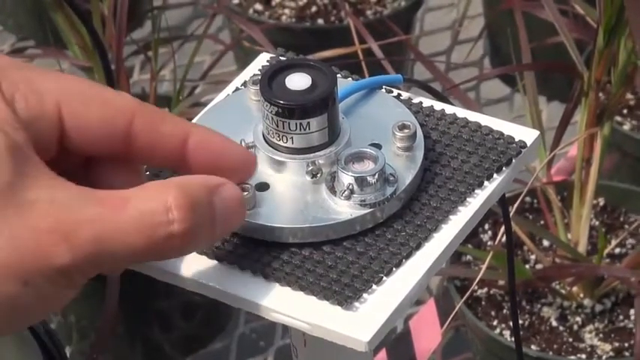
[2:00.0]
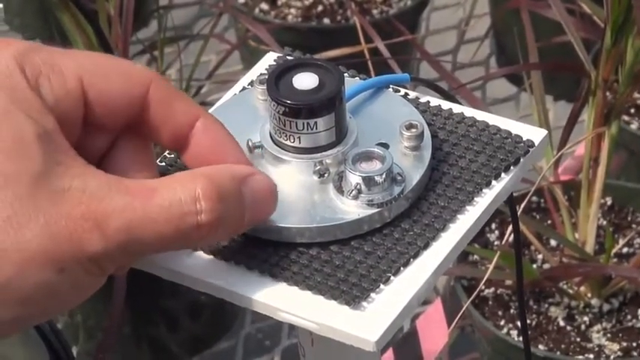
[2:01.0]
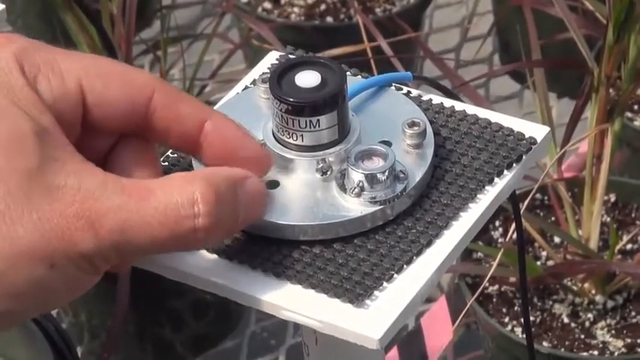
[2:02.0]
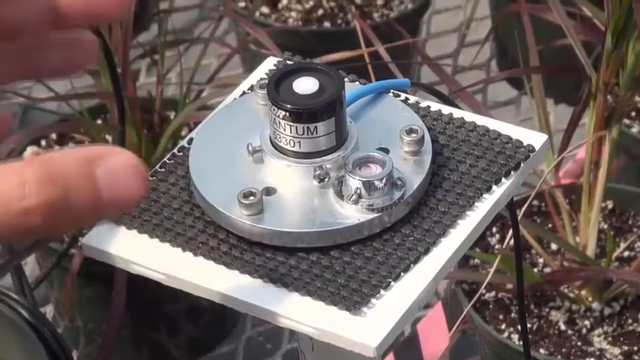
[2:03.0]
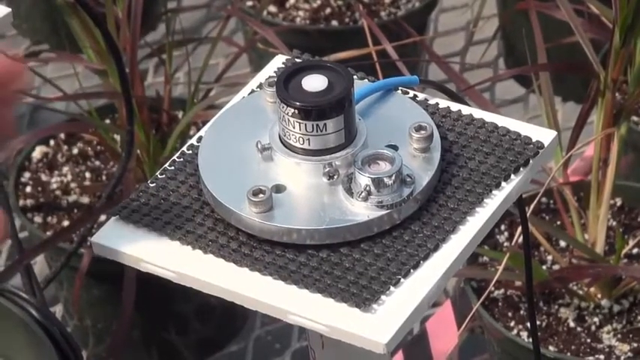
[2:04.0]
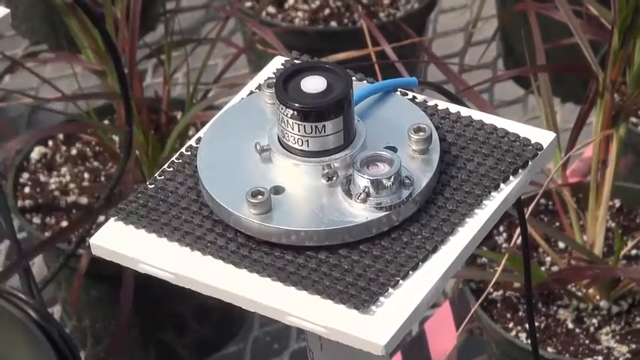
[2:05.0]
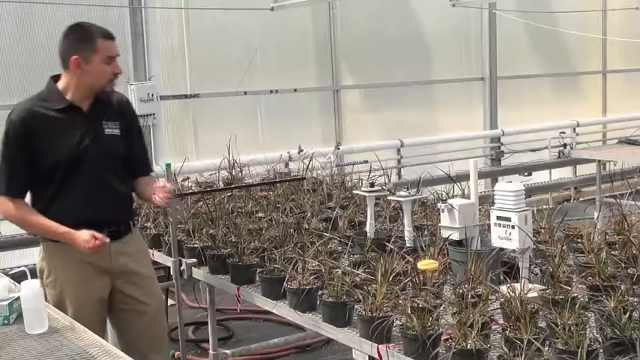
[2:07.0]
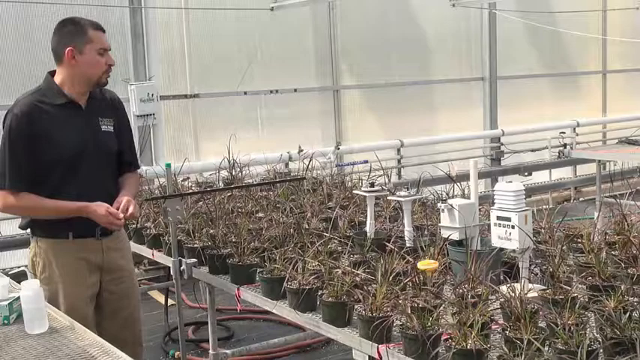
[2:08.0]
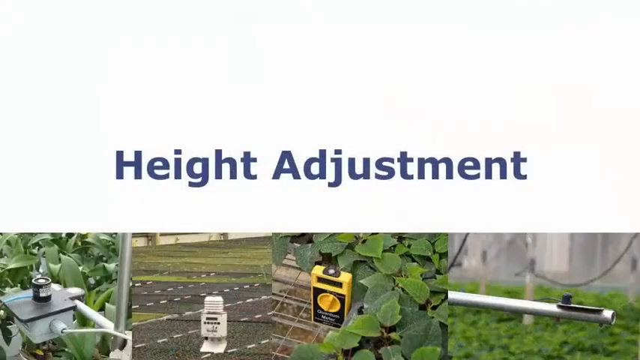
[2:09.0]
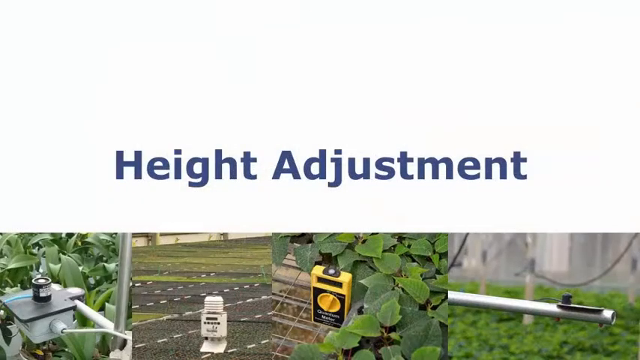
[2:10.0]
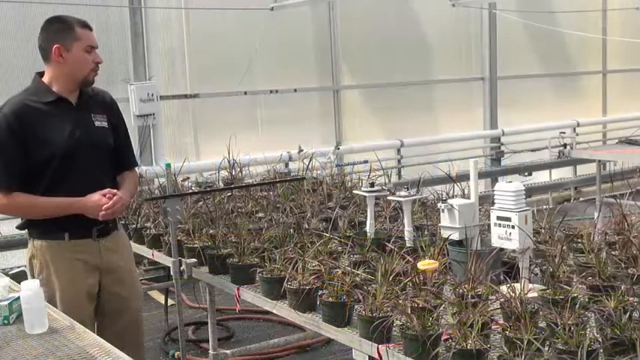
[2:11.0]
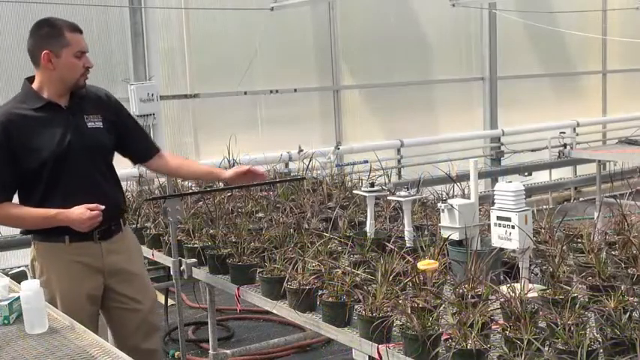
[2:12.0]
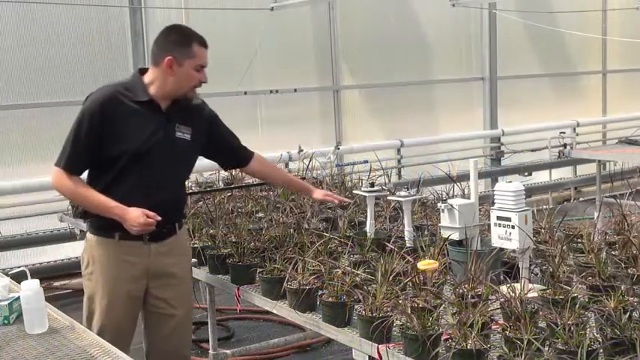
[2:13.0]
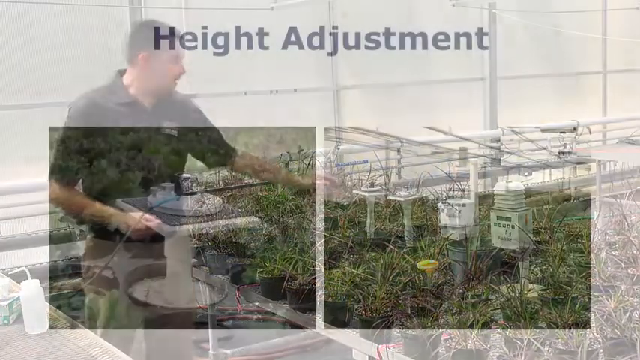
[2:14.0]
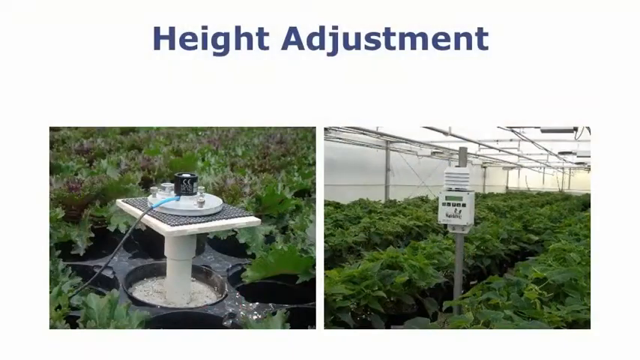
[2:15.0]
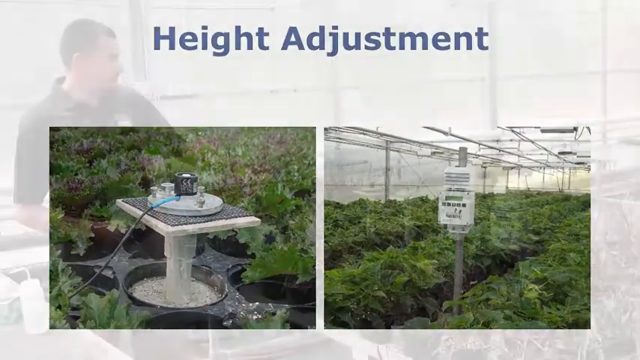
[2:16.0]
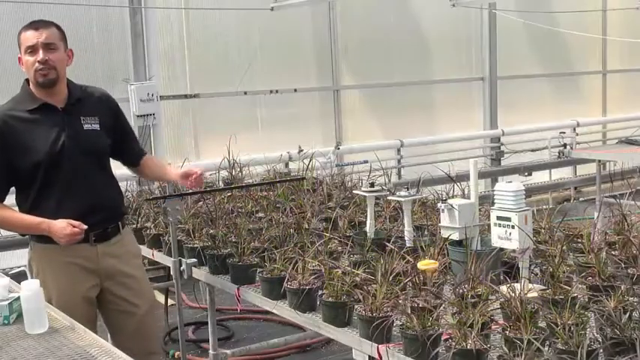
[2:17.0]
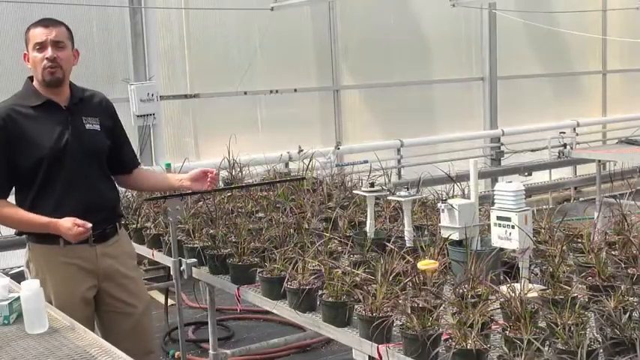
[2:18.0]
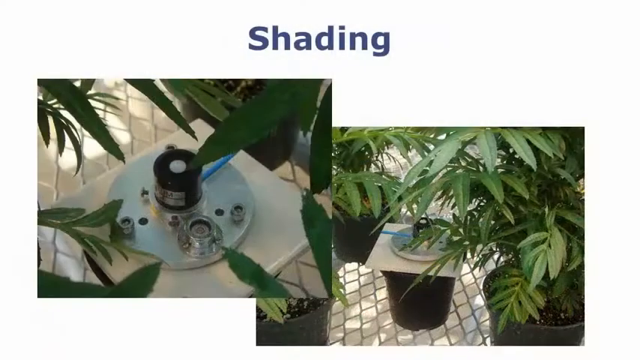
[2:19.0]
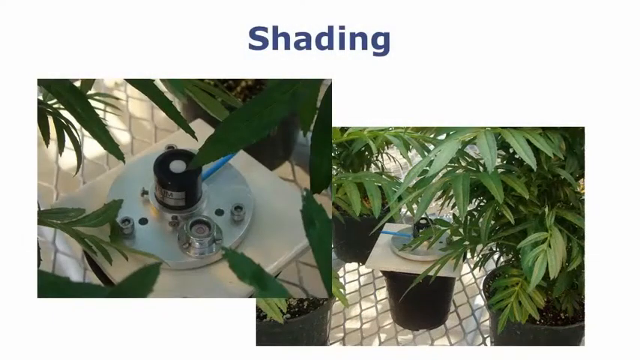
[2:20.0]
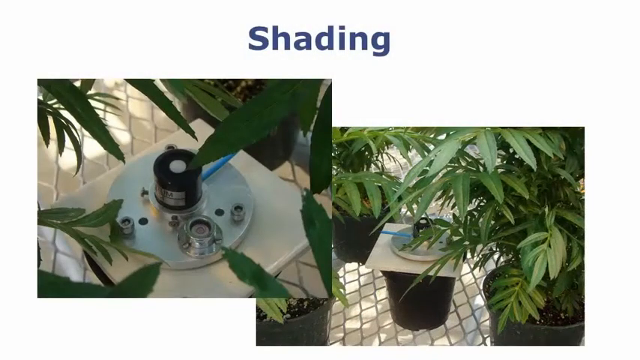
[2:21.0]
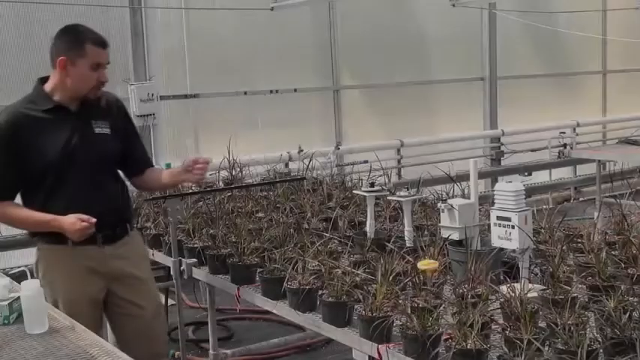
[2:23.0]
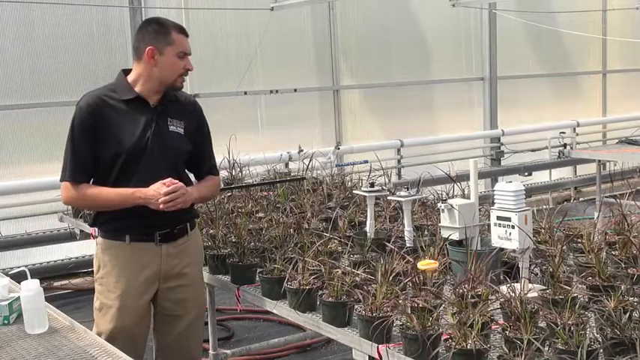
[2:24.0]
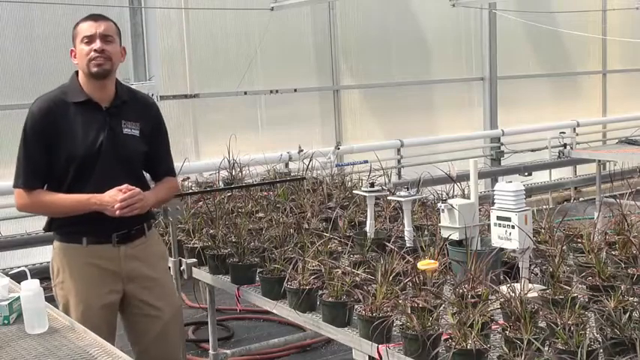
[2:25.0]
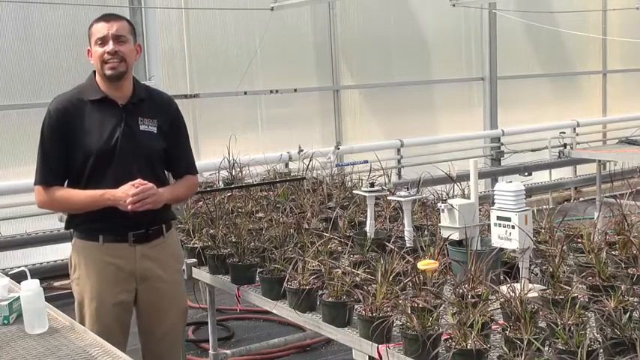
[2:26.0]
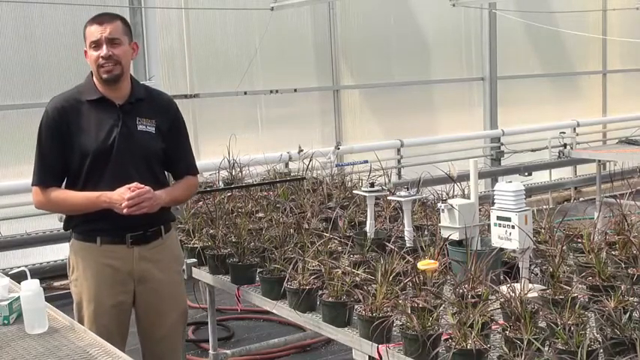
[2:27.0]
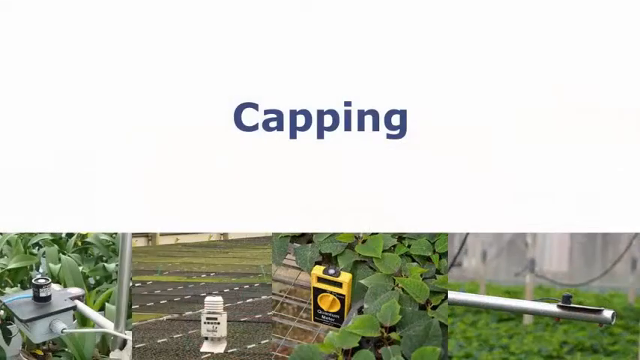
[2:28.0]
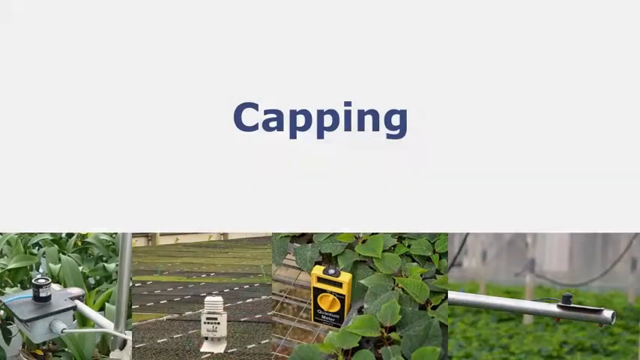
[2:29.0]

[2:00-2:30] The camera is zoomed in on his left hand, its thumb on the left side of the screen, as he uses his thumb and pointer finger on a black knob with a white circle on top. It shows a word that appears to be "quantum," with the letters "ANTUM" visible, and at the bottom what looks like a 5, possibly a 3 or 9, then 301. There are knobs and screws all around it. He moves closer to the screw right in front of these letters and twists it a little with his thumb and pointer finger while talking. Blue text reads "height adjustments." He then points at the object with his left hand, fingers closed together and palm open. Text reads "shading," and leaves are visible above what is apparently the quantum sensor. Blue text reads "capping," and he puts a green cap on top of it.